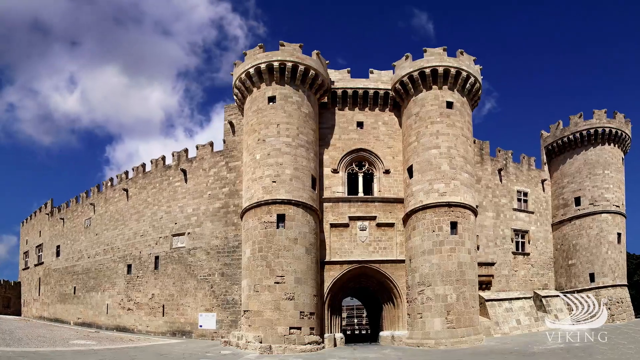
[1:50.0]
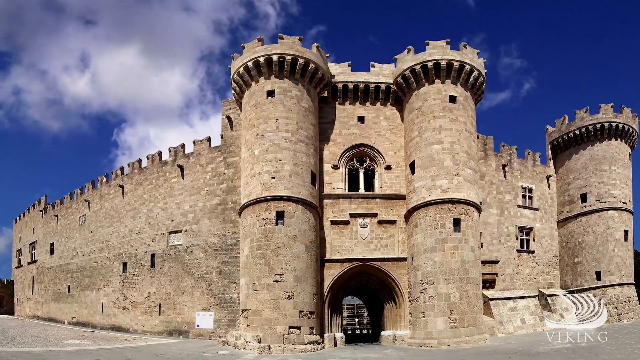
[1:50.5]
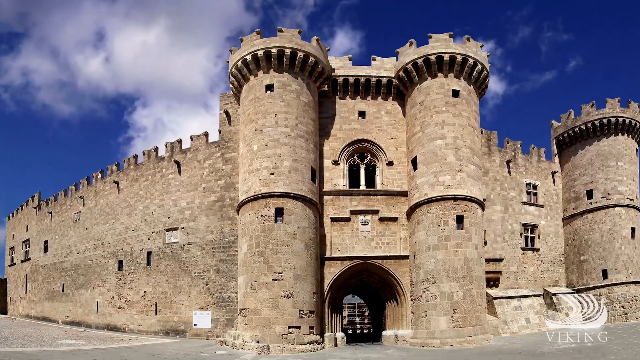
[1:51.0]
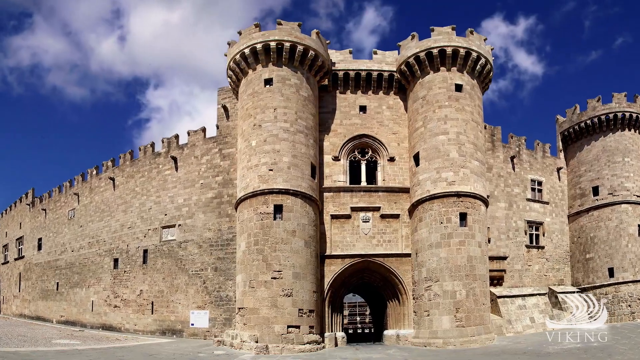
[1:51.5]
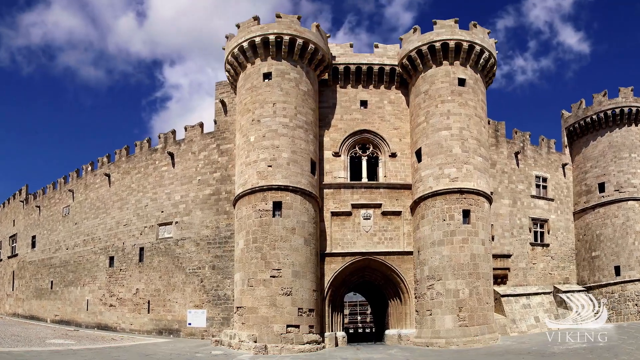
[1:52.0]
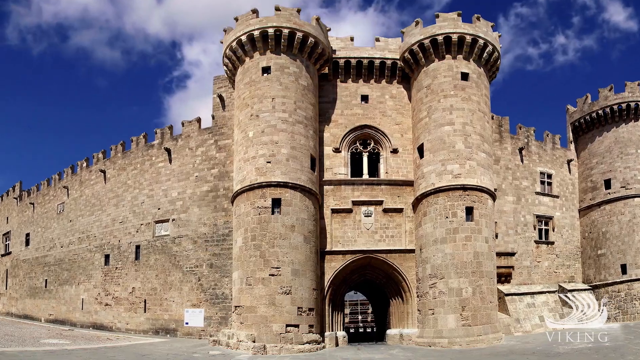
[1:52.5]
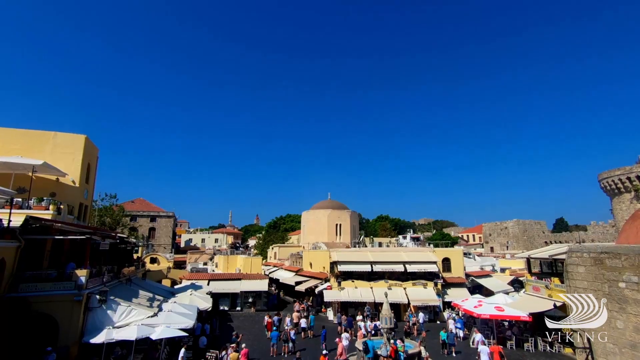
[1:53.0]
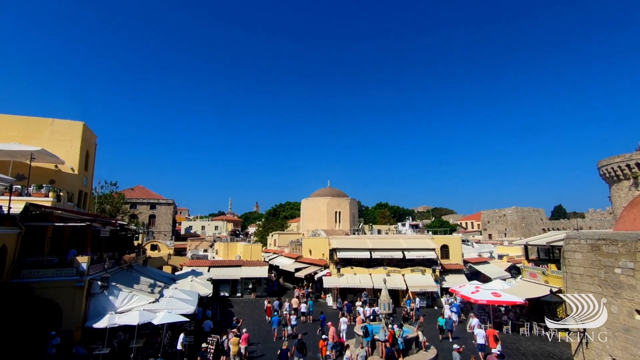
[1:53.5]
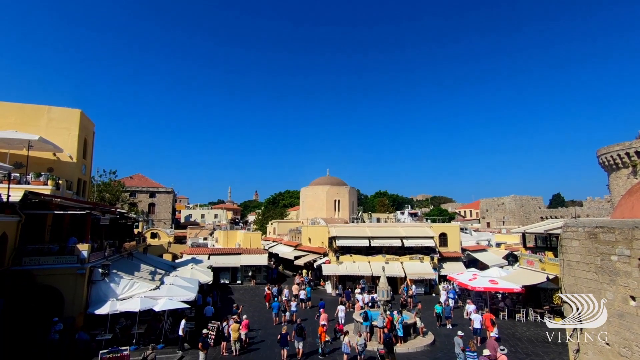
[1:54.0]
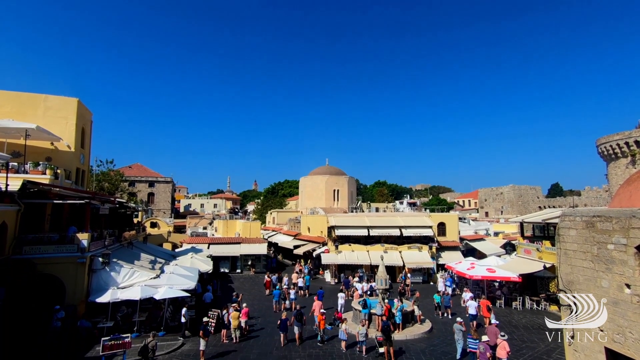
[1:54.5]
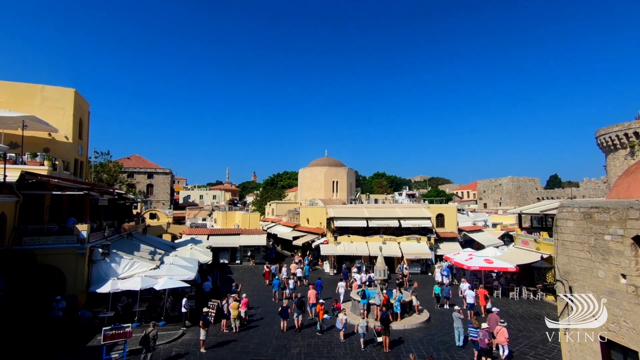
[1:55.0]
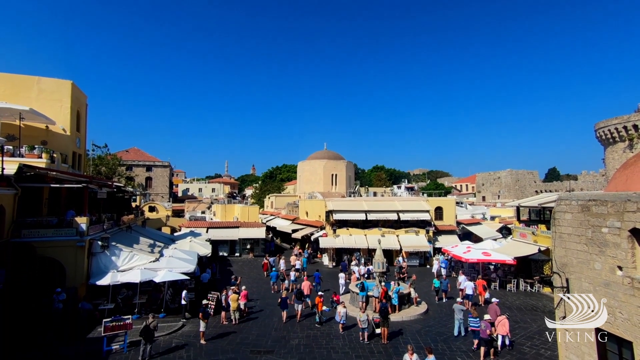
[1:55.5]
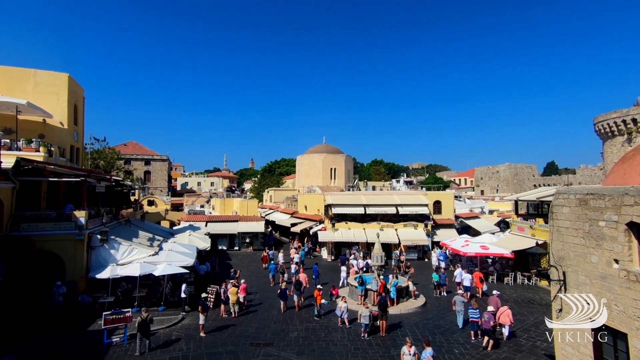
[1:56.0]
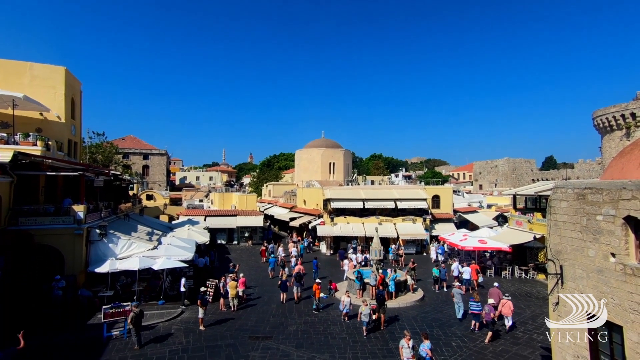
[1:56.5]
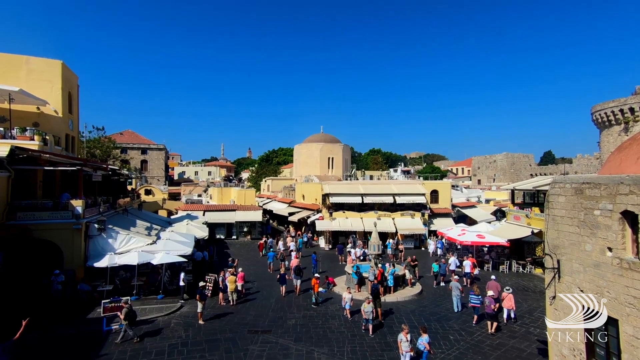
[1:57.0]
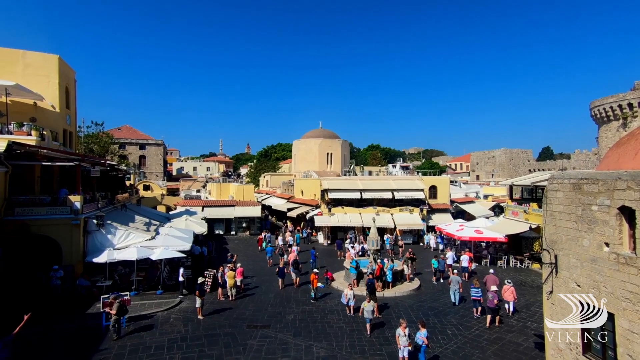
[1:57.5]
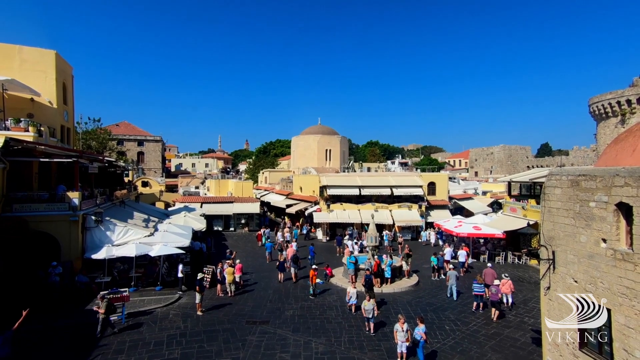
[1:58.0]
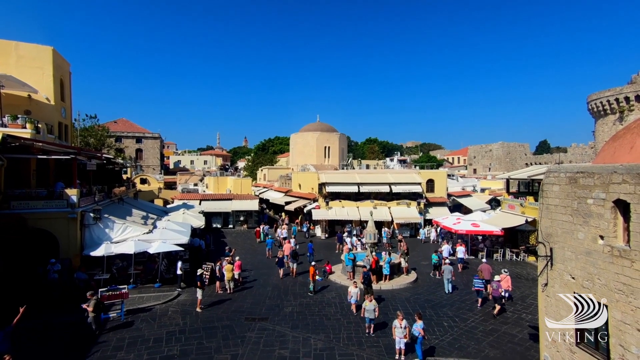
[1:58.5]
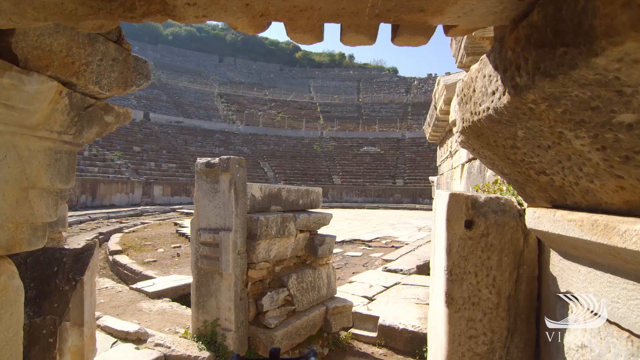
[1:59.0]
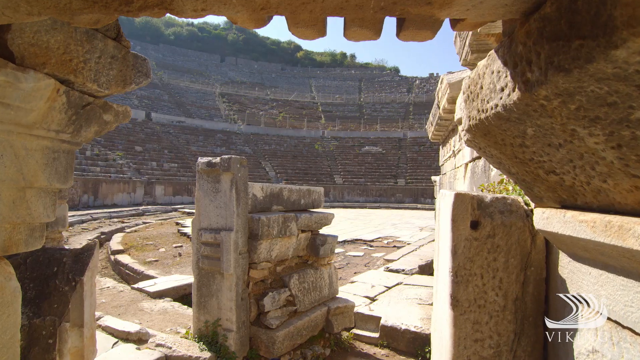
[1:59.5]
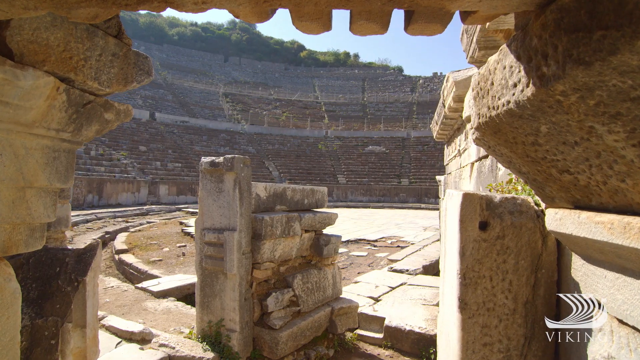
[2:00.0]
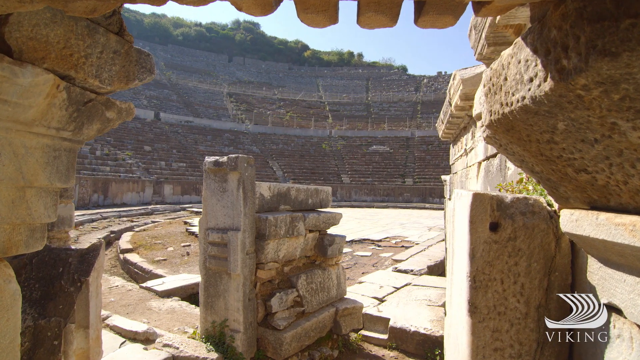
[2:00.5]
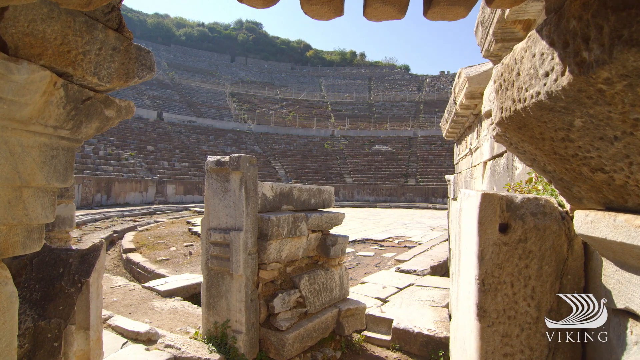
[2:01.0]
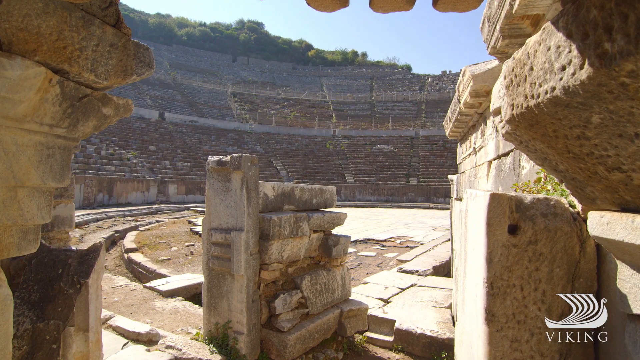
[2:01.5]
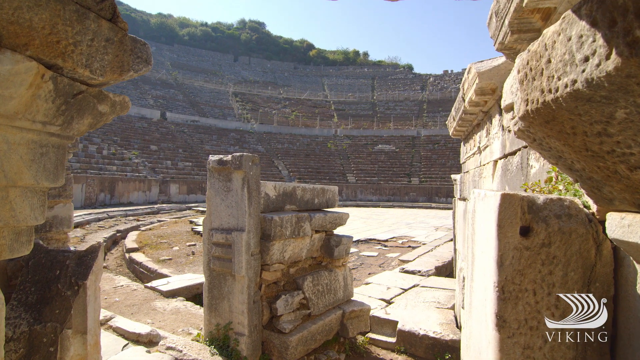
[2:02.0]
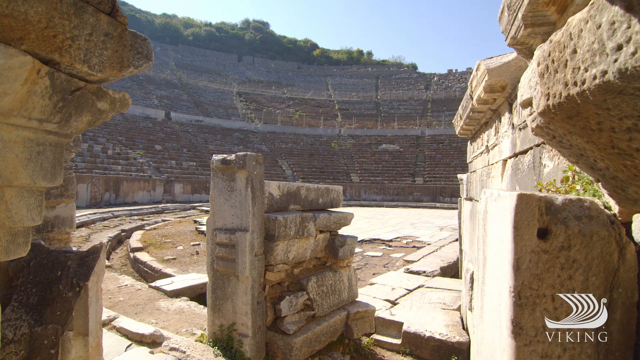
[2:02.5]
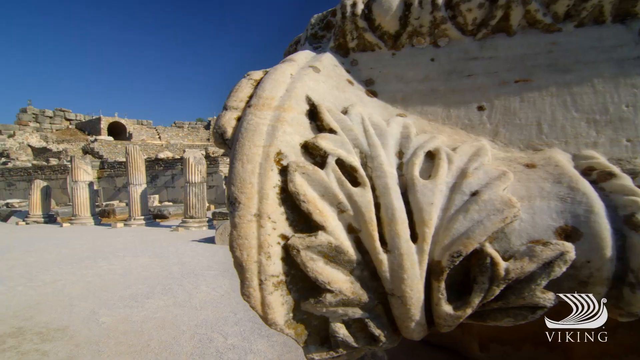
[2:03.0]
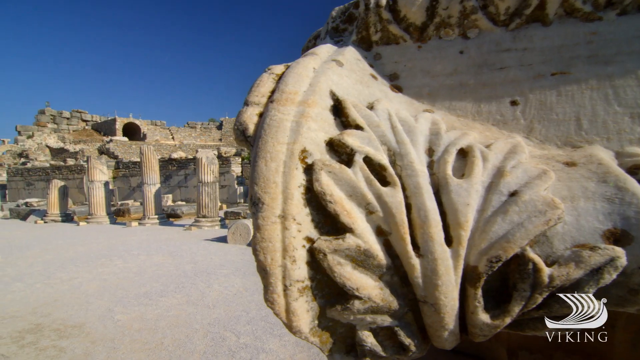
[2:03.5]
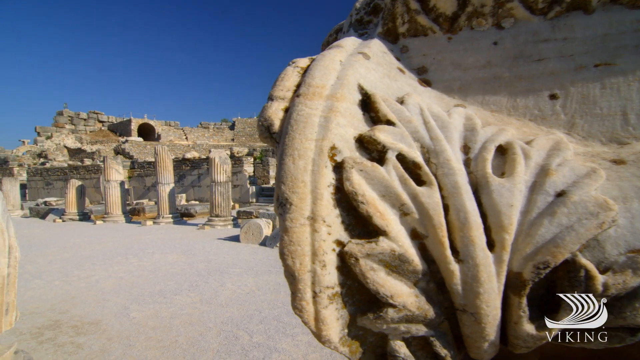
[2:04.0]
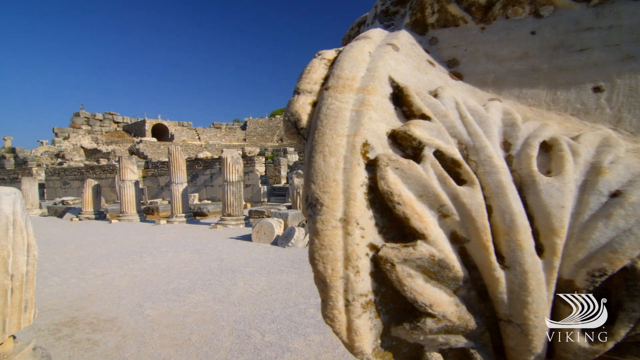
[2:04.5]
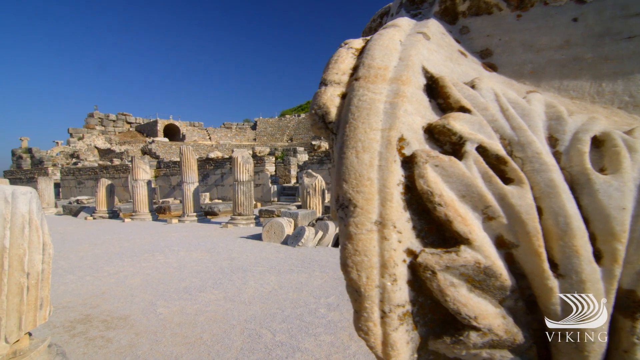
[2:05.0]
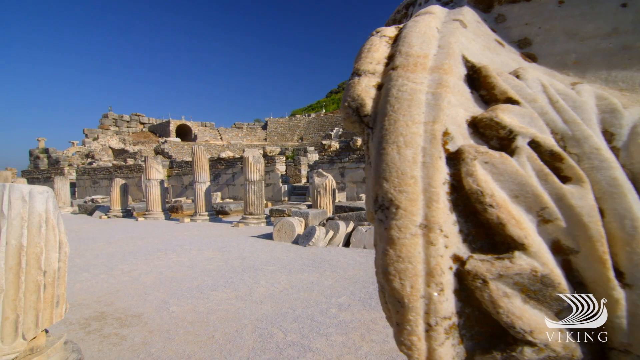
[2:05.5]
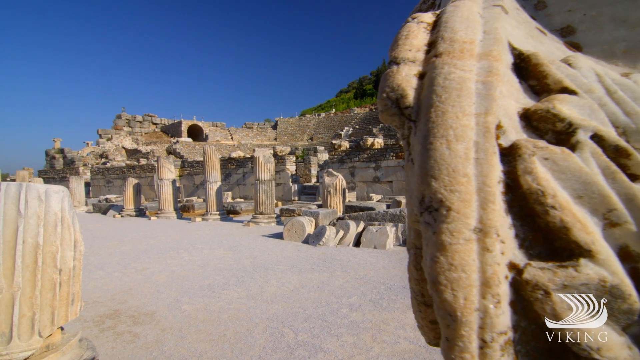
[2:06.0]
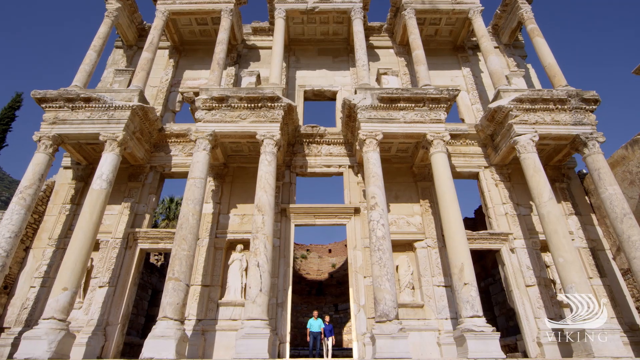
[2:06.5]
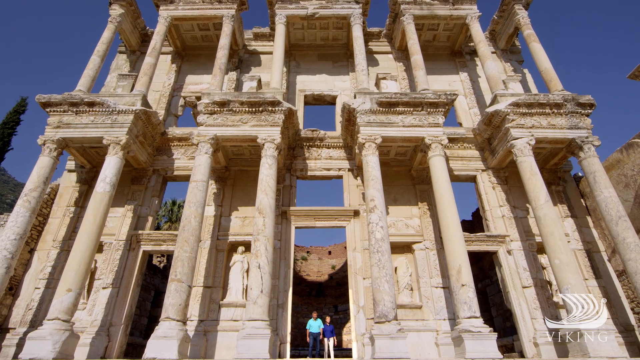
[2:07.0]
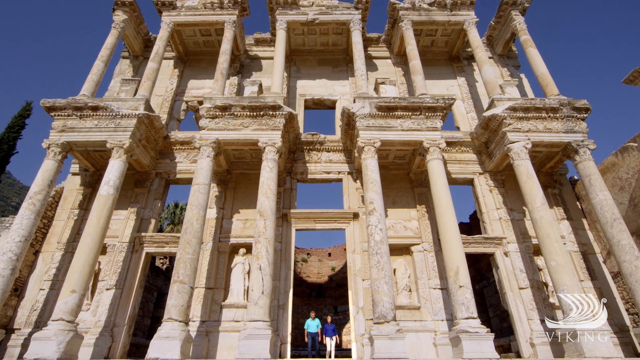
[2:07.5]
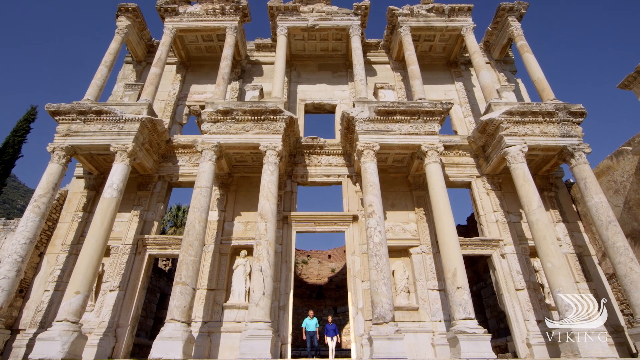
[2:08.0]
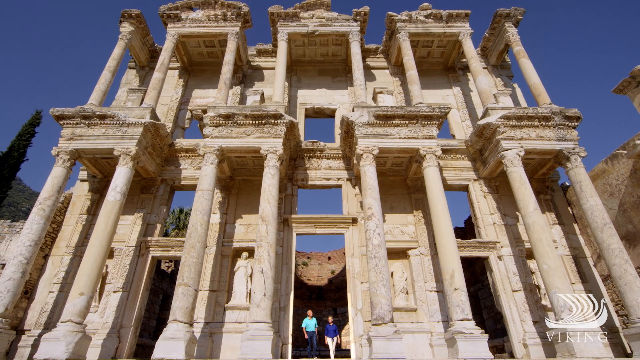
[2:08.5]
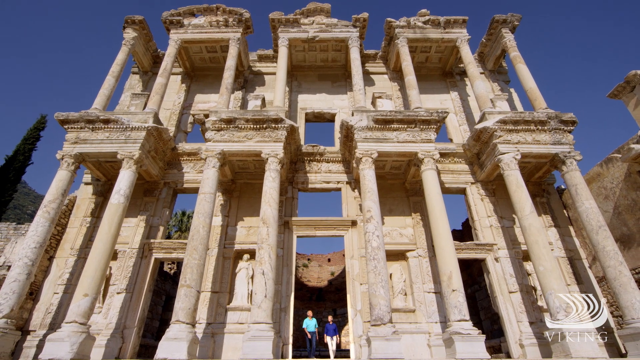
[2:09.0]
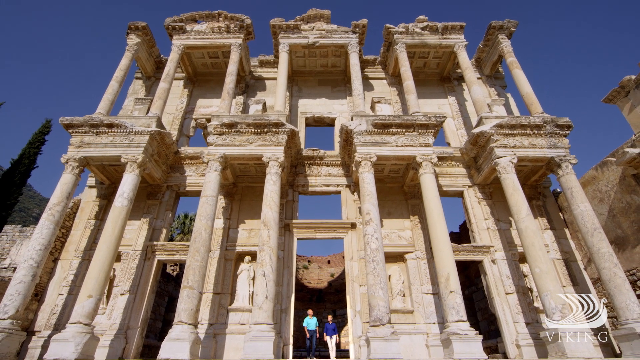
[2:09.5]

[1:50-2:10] The view moves a little closer to the castle, then shows a wide view of what looks like an outdoor market with people shopping and walking about and buildings in the background. Next the view comes through a walkway into what looks like the coliseum in Rome, as if entering the arena, showing the ruins of the coliseum. Another view shows more Greek ruins, including the front of a building. With the ruined pillars, the view starts in an extreme close-up of one, almost as if walking around it, and then shows the others. A shot looking up from the bottom shows two stories of large doorways, four on the bottom and three on the top, with large columns on either side and blue sky behind. Another view shows trees in the background, a gray sky, stone steps, and a gray stone ruin with what look like Roman letters carved into the stone.